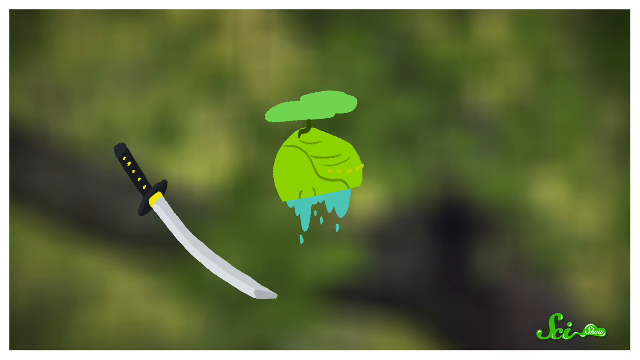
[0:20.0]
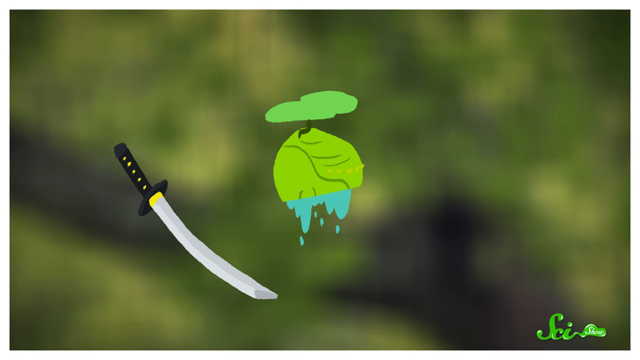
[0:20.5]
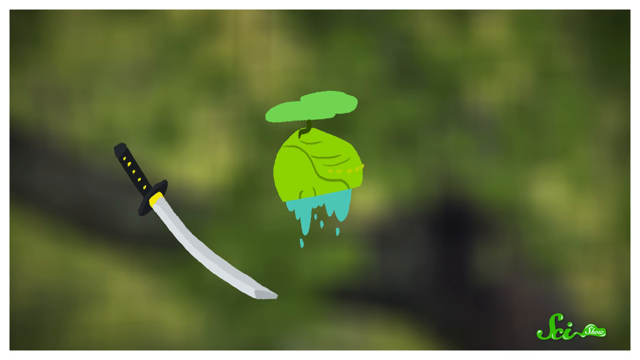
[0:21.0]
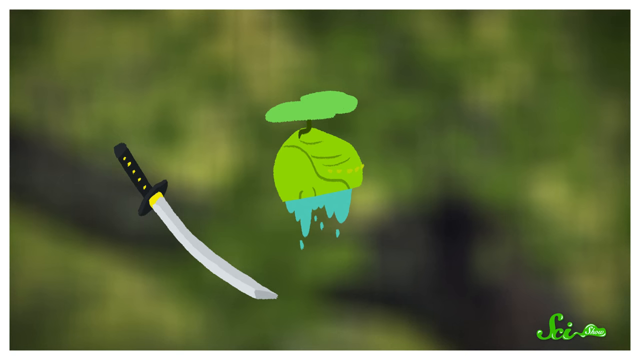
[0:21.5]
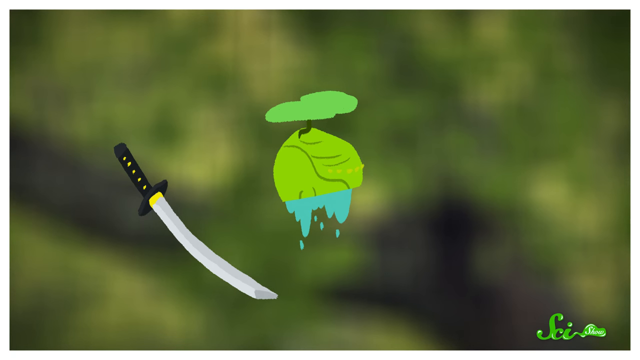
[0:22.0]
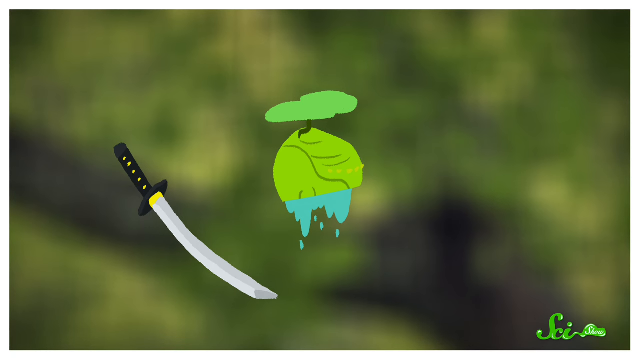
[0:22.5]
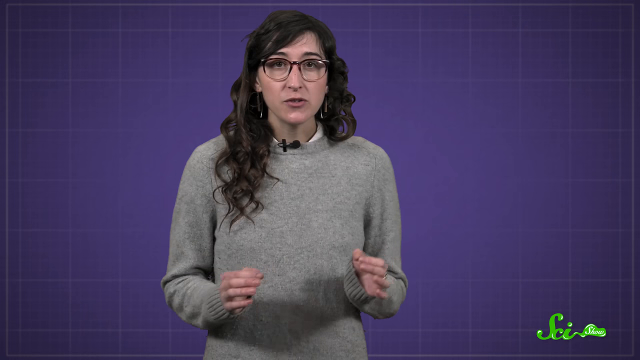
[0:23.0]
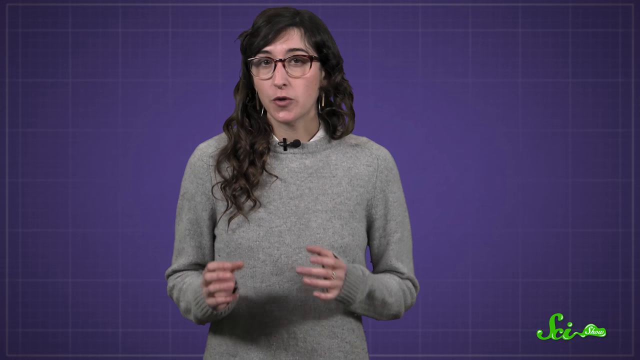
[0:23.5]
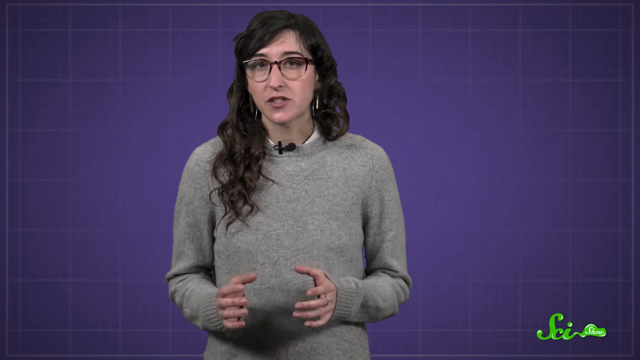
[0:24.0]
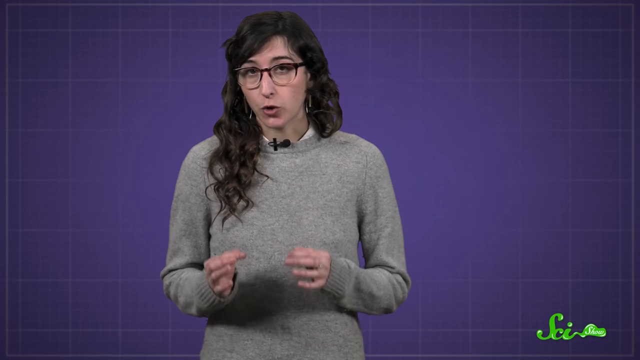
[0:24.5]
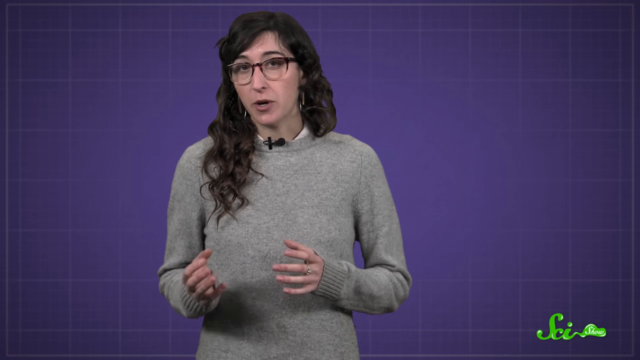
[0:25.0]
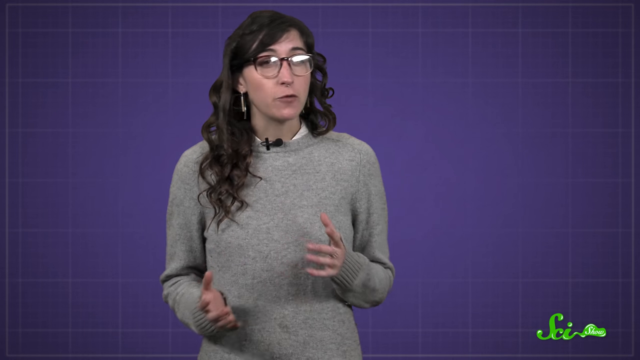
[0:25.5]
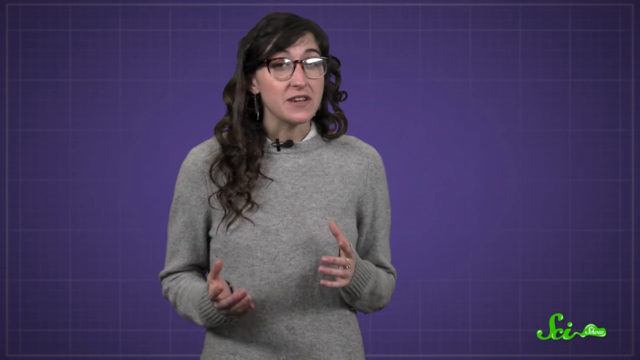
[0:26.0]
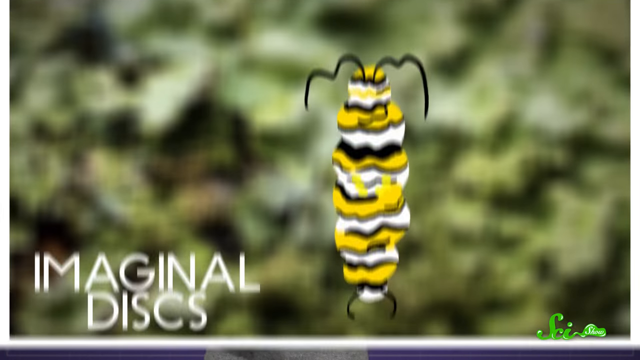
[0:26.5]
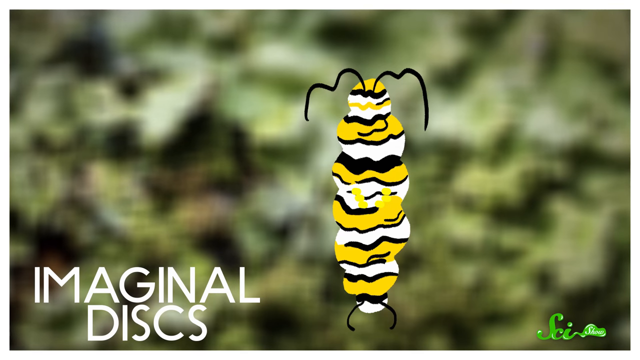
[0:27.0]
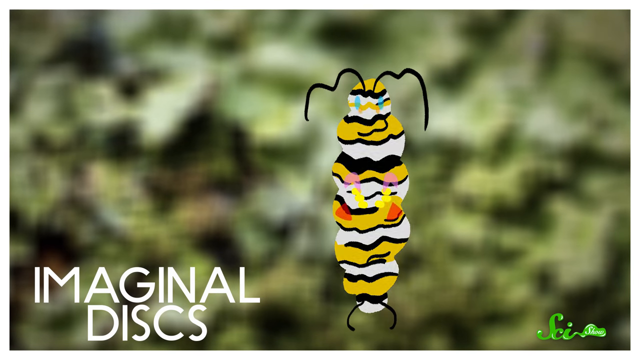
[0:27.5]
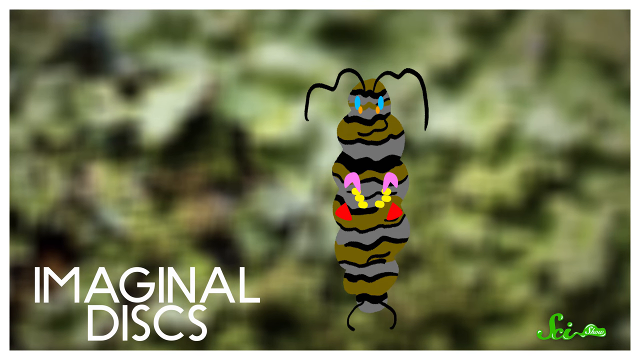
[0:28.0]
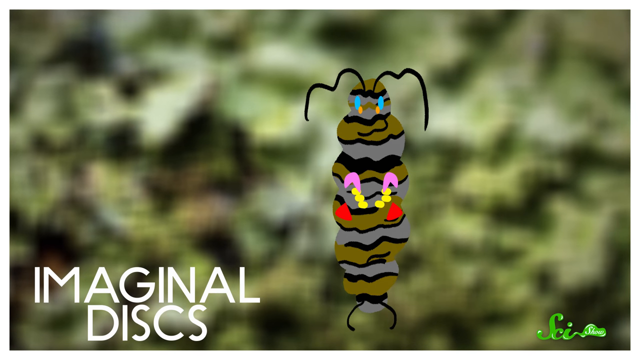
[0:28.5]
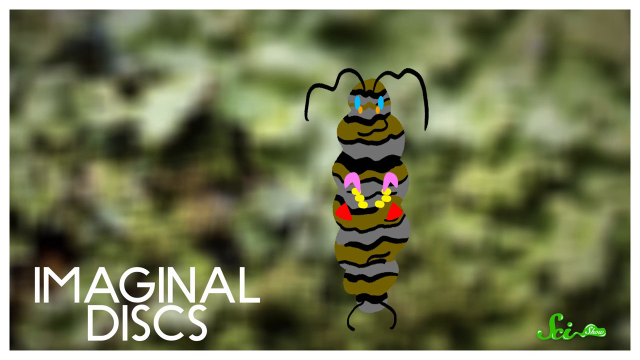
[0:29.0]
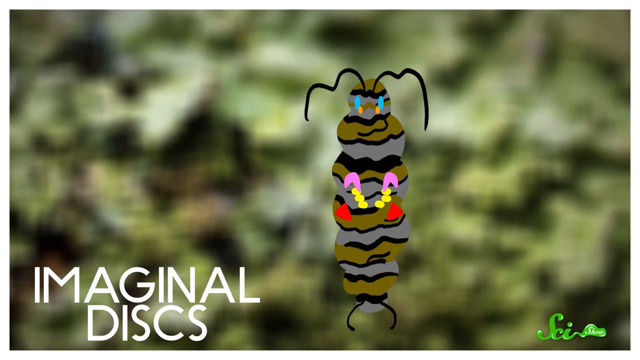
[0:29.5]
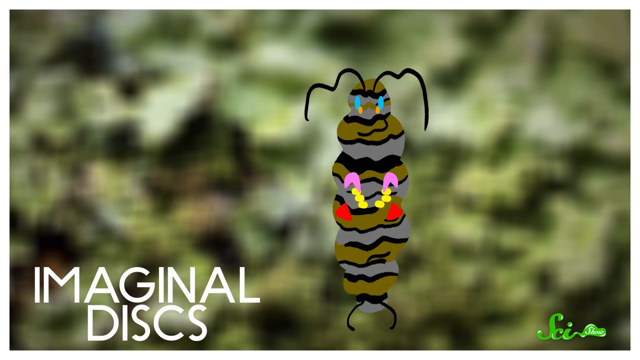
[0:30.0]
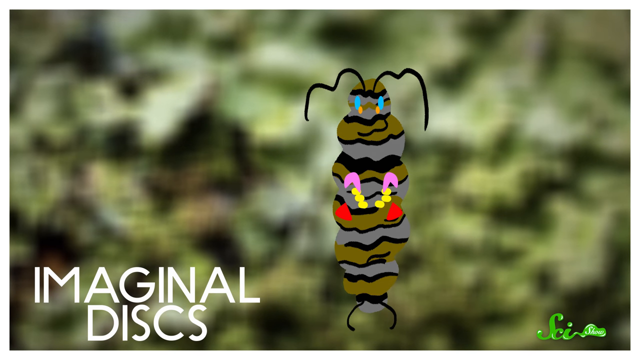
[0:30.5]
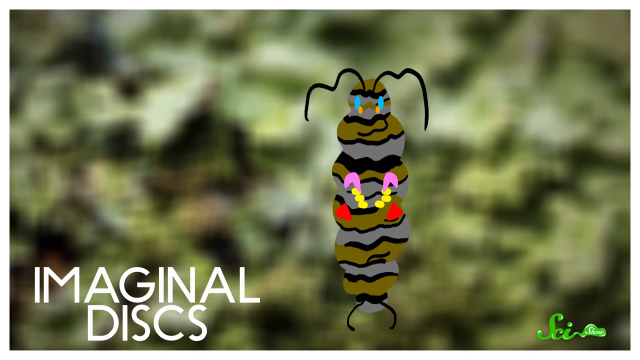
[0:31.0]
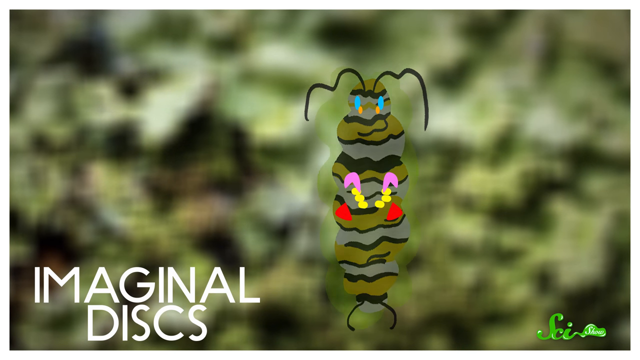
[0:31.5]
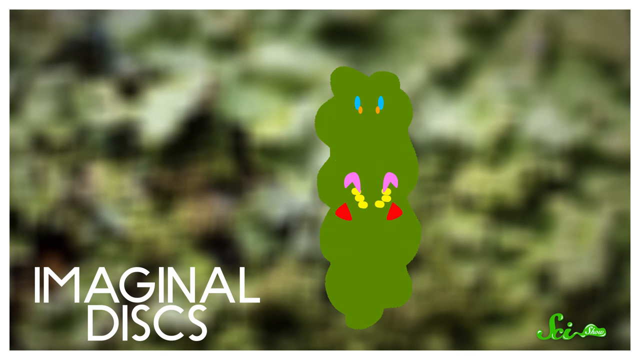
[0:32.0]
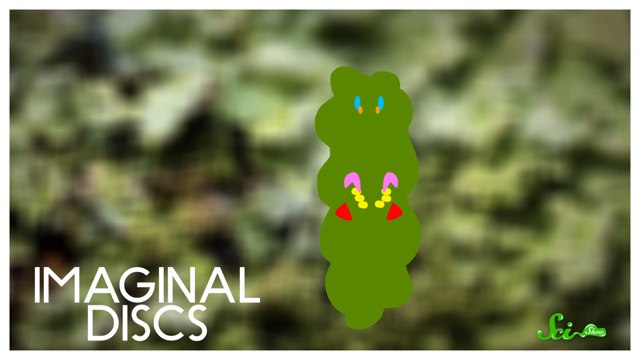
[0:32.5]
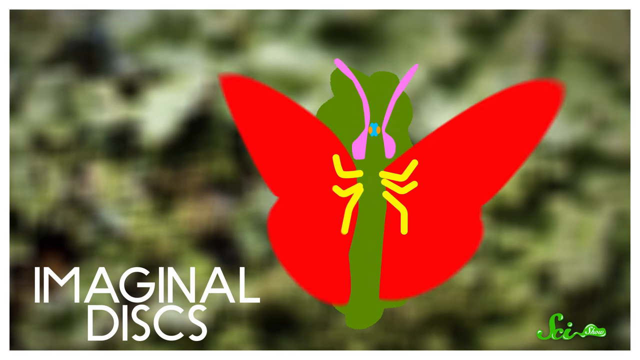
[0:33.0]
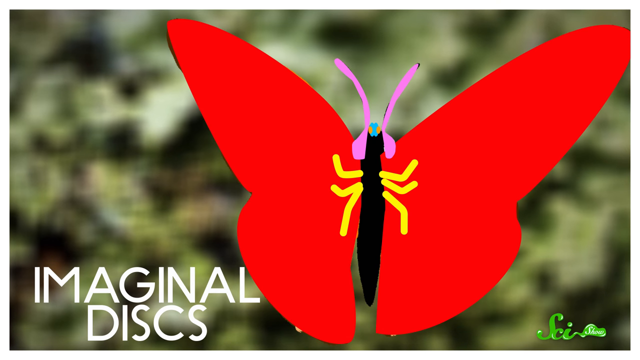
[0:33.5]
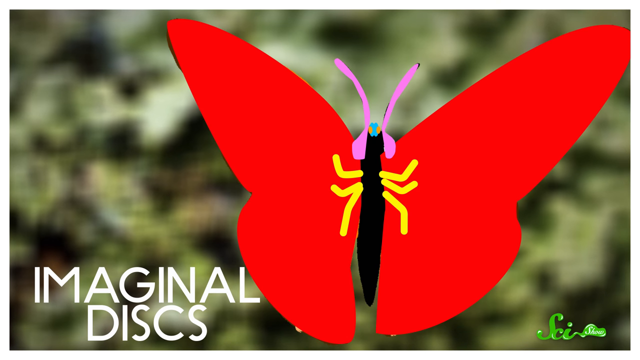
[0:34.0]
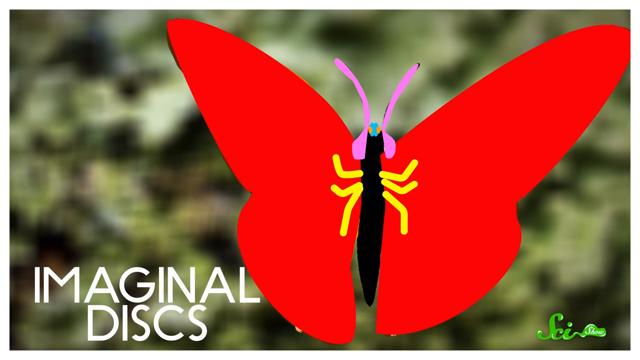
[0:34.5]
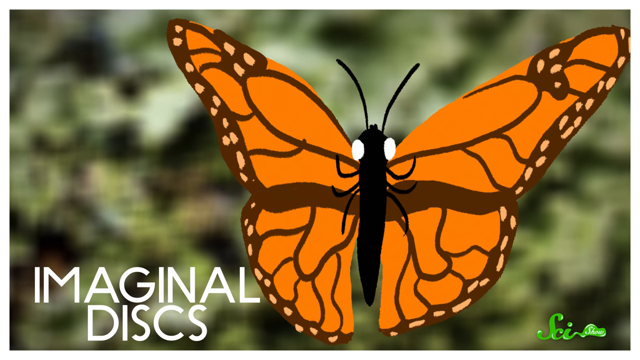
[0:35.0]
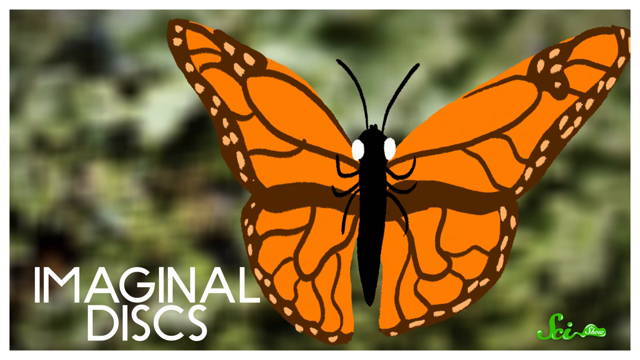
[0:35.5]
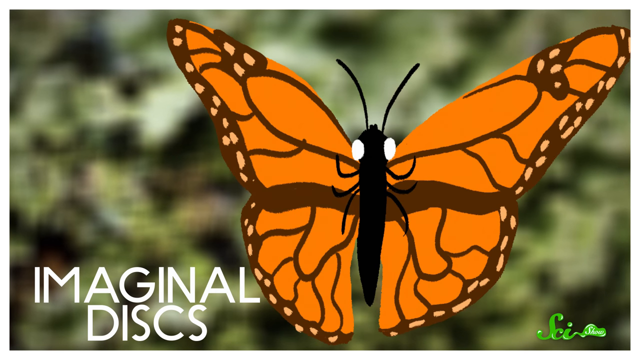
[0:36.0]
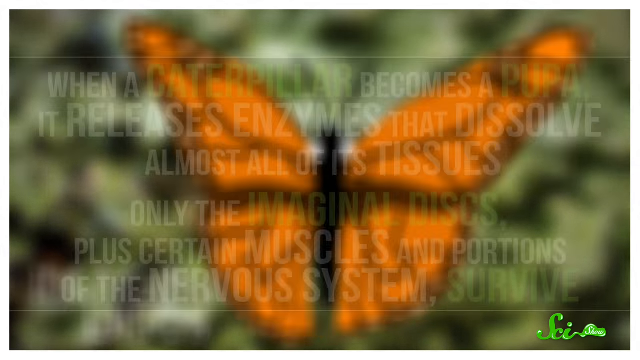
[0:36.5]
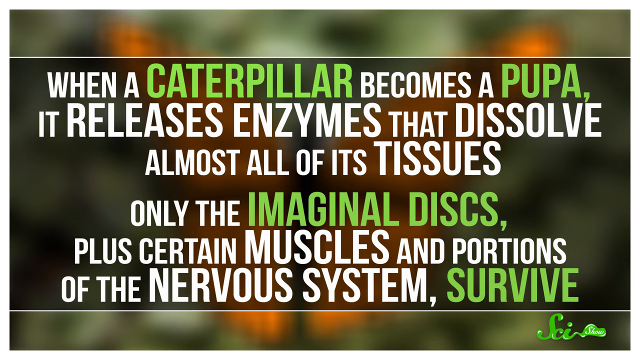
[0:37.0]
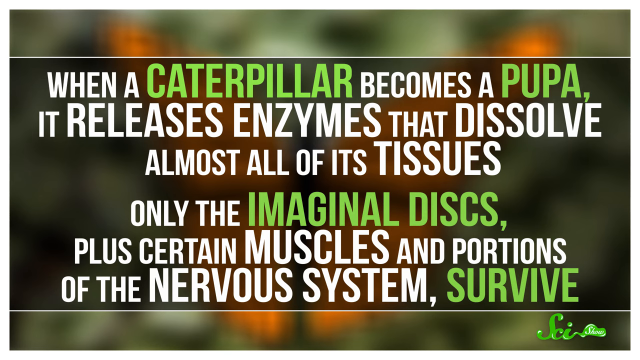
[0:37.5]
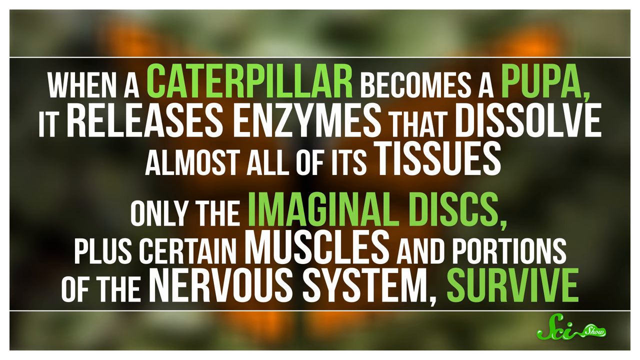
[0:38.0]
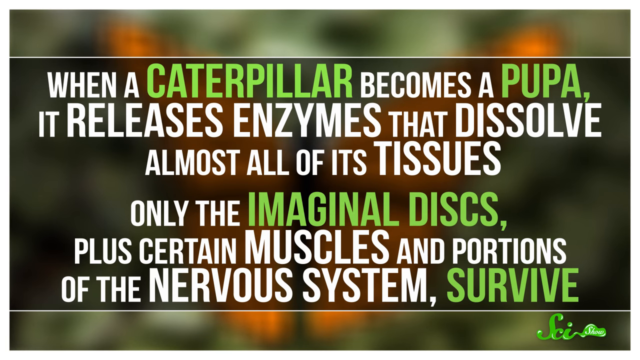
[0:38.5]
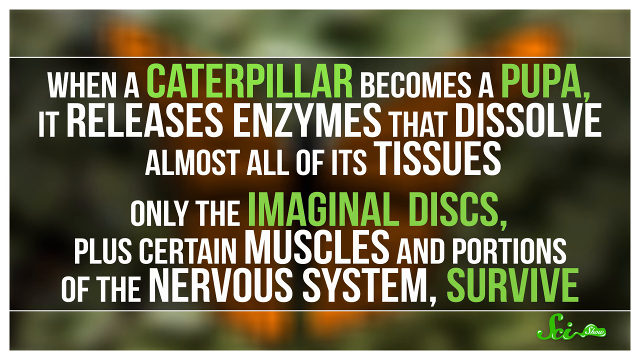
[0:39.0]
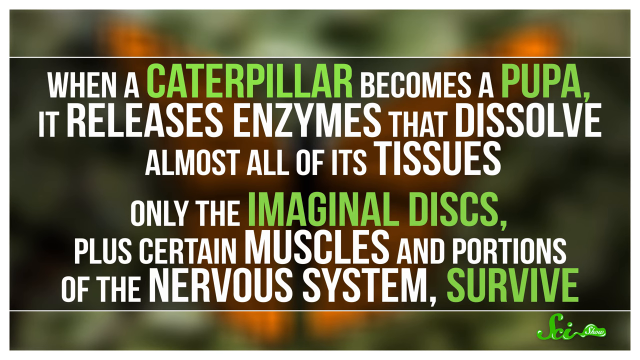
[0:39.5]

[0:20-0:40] A knife has cut the chrysalis in half. The woman talks again, using her hands. She says it's imaginal disks, and certain parts of the caterpillar are colored red, yellow, pink, orange and blue. The same image then appears with the caterpillar all green, like a green glob, and the highlighted parts grow into a butterfly. Text appears reading "when a caterpillar becomes a pupa, it releases enzymes that dissolve almost all of its tissues. Only the imaginal discs plus certain muscles and portions of the nervous system survive."